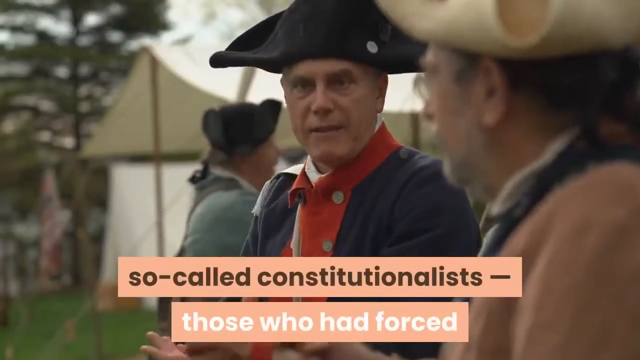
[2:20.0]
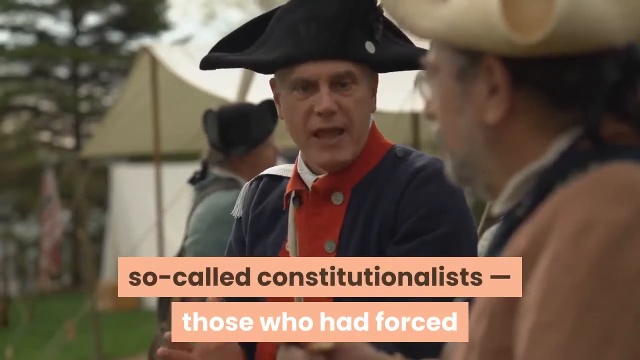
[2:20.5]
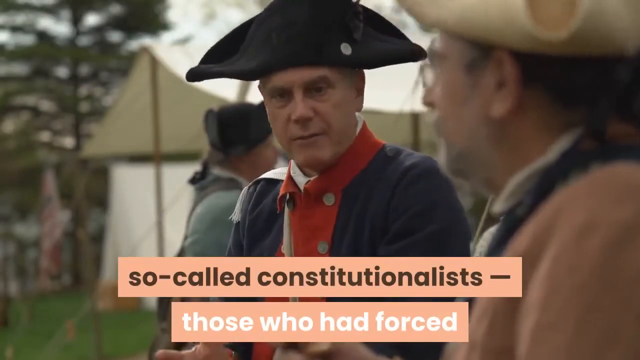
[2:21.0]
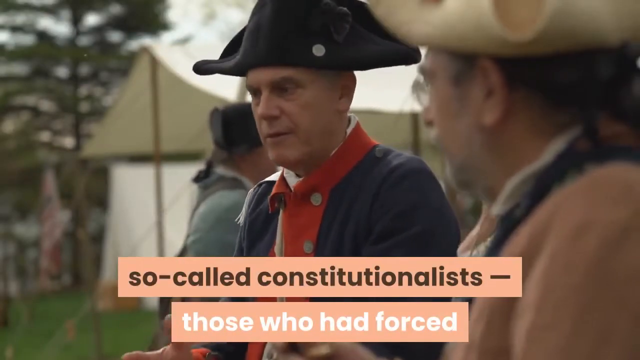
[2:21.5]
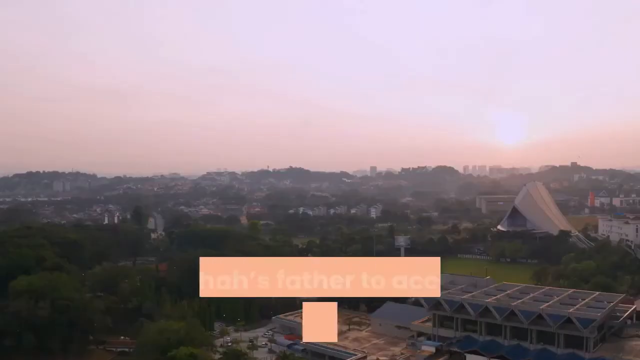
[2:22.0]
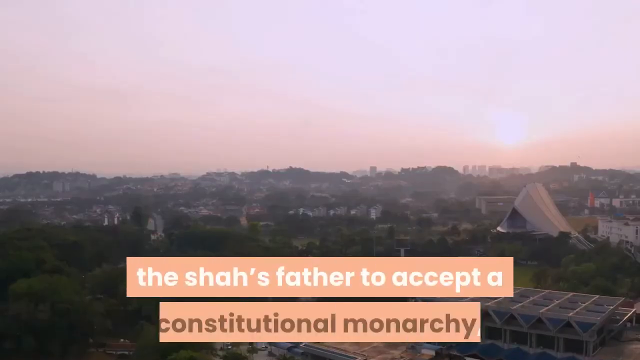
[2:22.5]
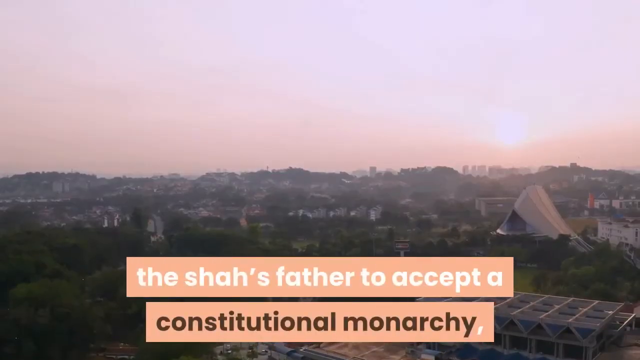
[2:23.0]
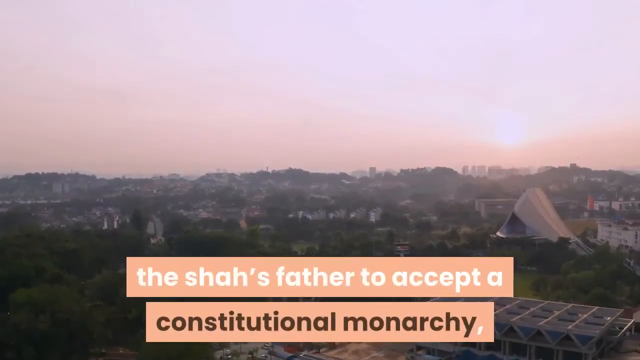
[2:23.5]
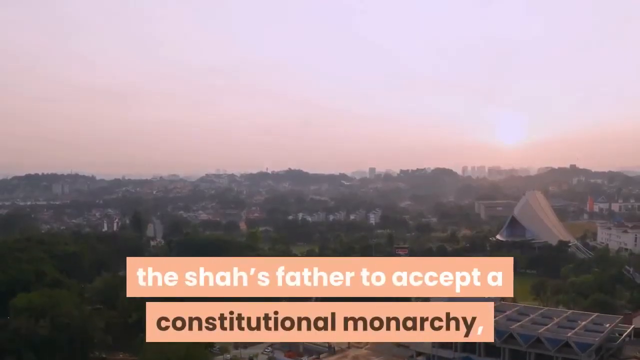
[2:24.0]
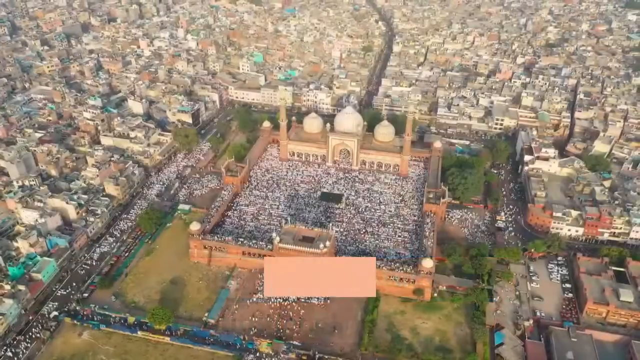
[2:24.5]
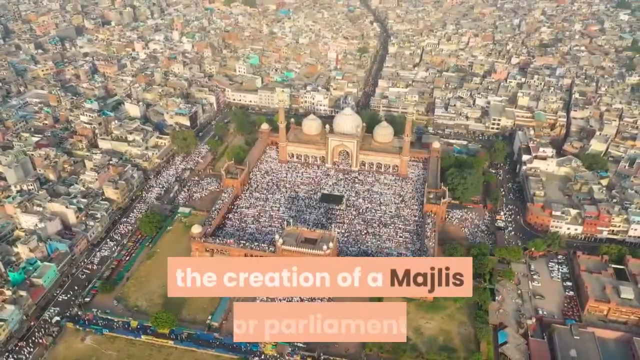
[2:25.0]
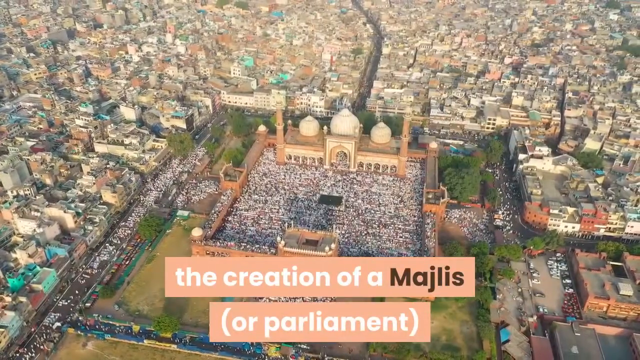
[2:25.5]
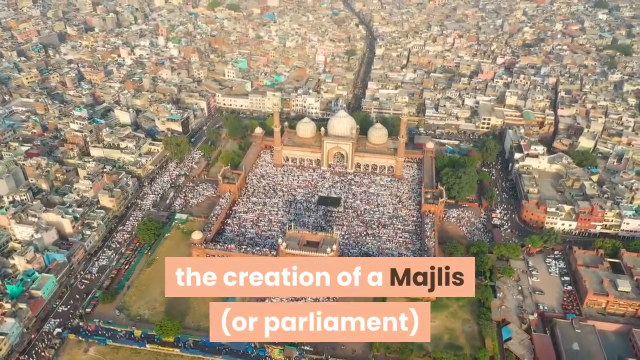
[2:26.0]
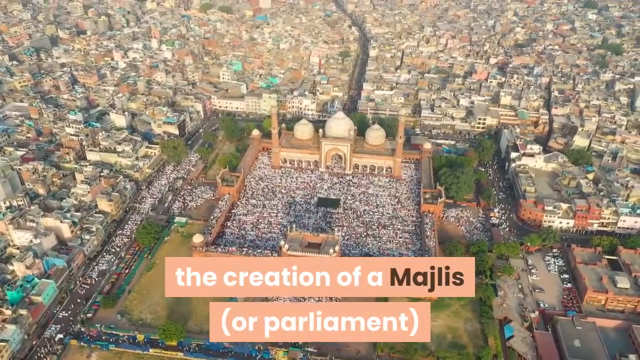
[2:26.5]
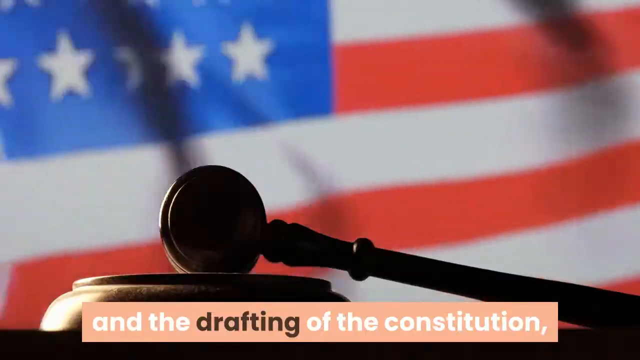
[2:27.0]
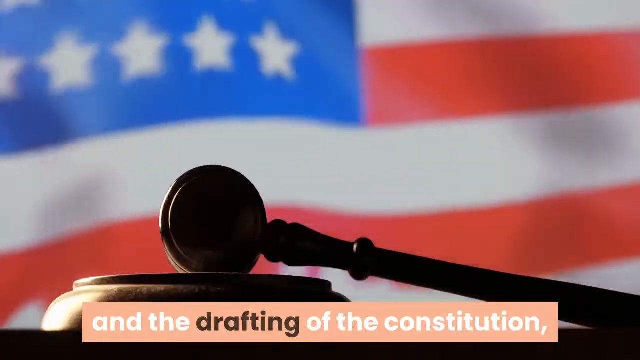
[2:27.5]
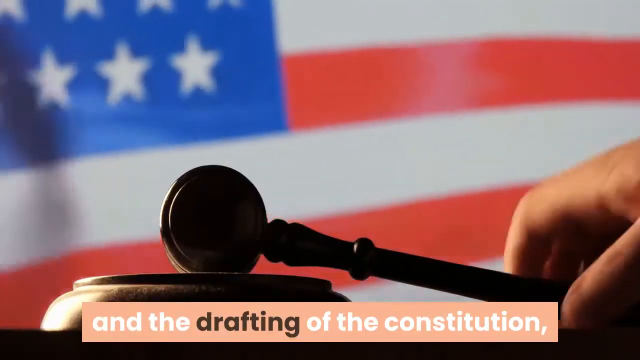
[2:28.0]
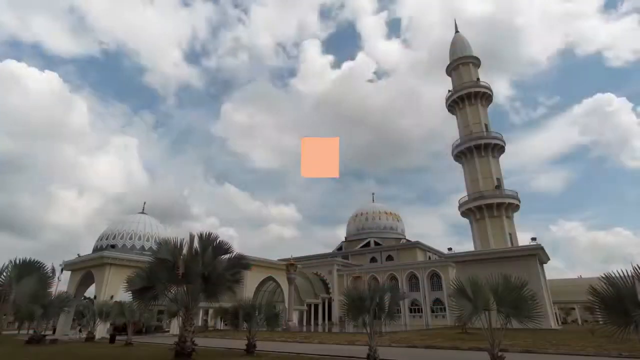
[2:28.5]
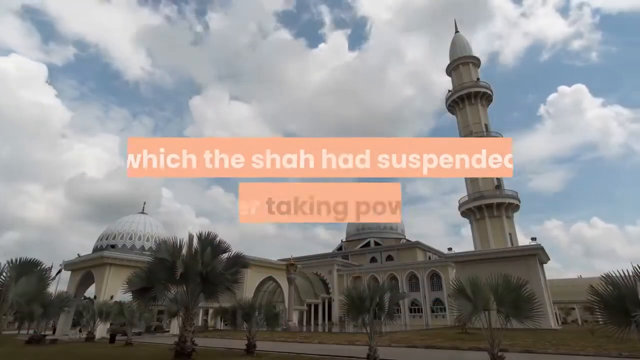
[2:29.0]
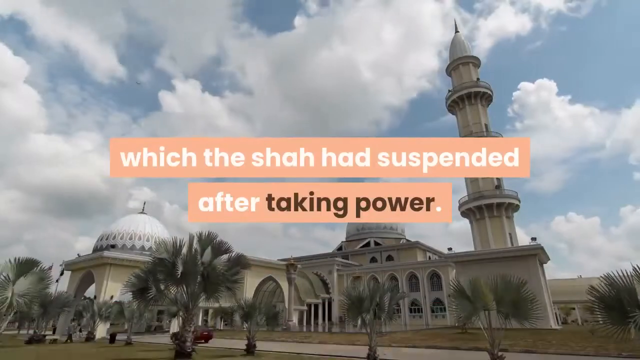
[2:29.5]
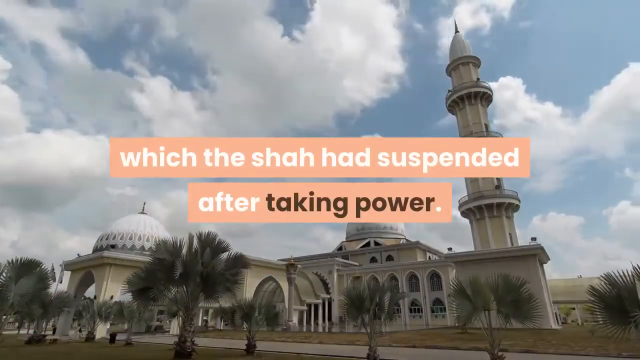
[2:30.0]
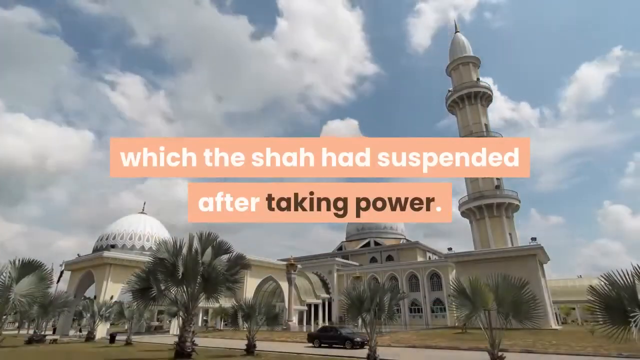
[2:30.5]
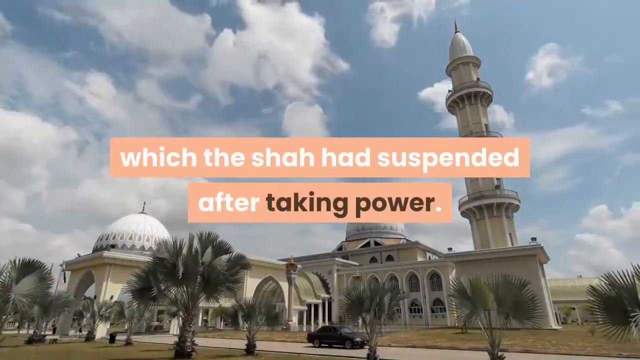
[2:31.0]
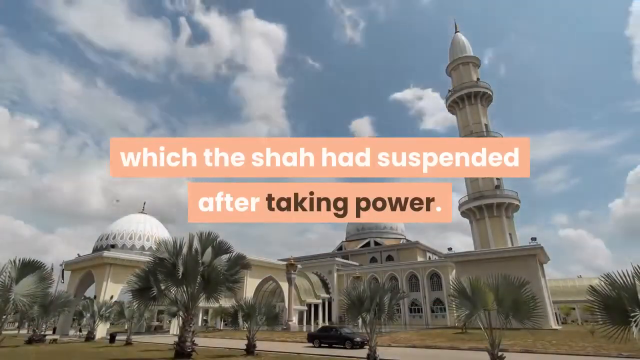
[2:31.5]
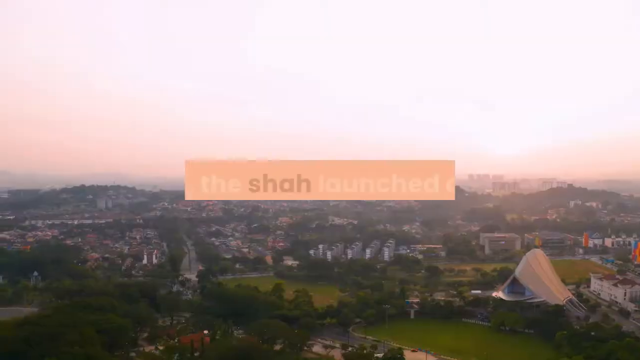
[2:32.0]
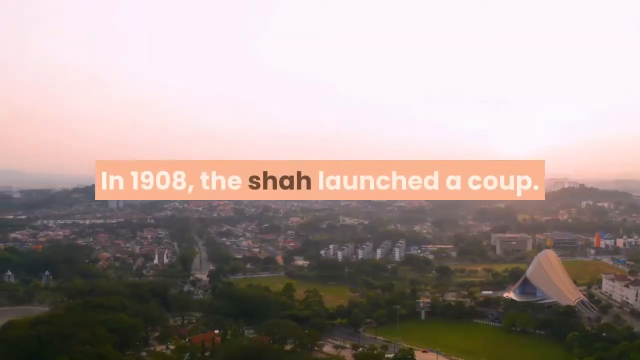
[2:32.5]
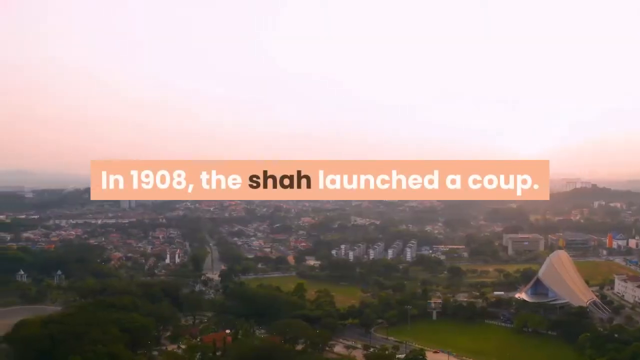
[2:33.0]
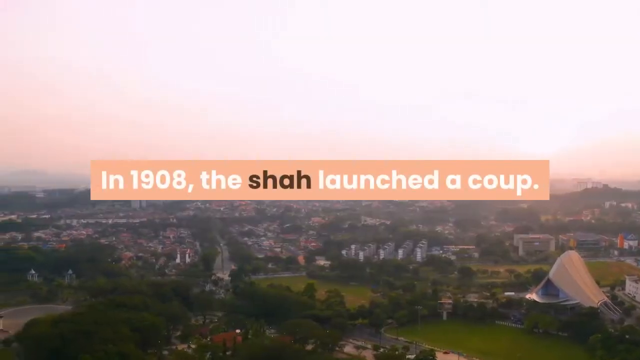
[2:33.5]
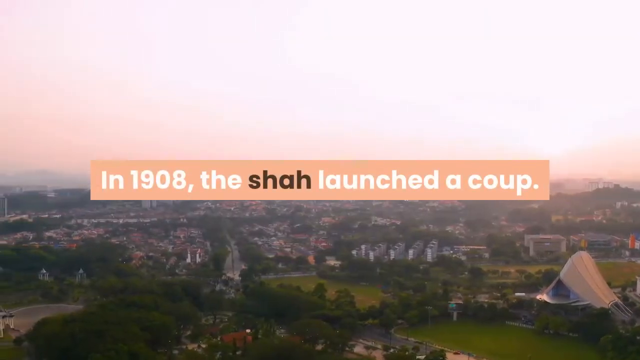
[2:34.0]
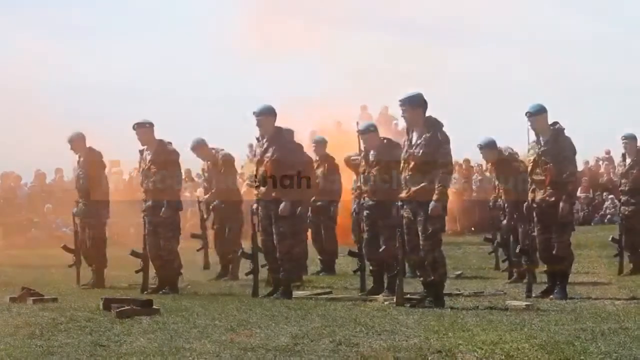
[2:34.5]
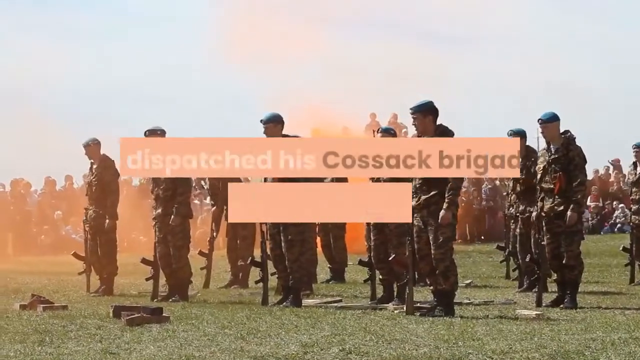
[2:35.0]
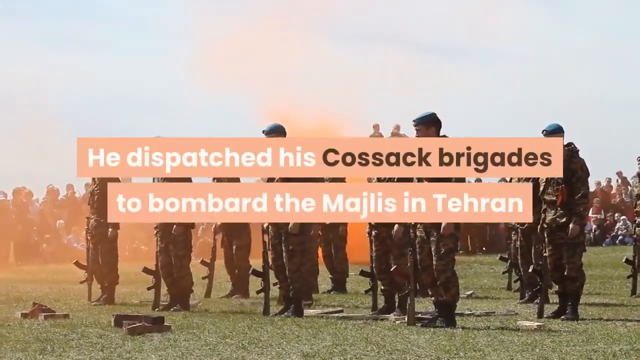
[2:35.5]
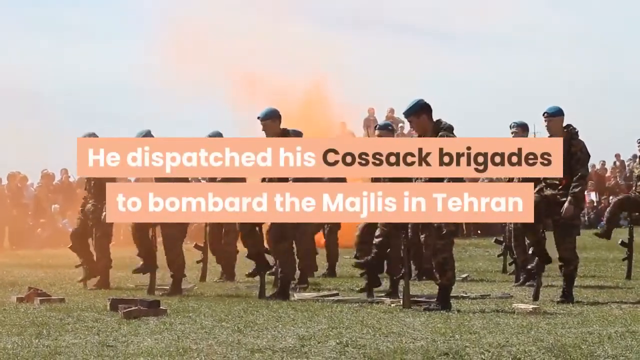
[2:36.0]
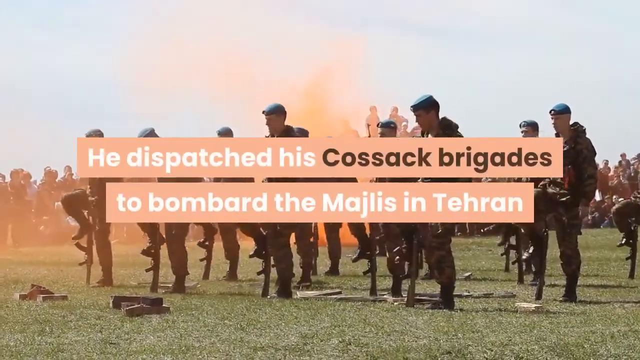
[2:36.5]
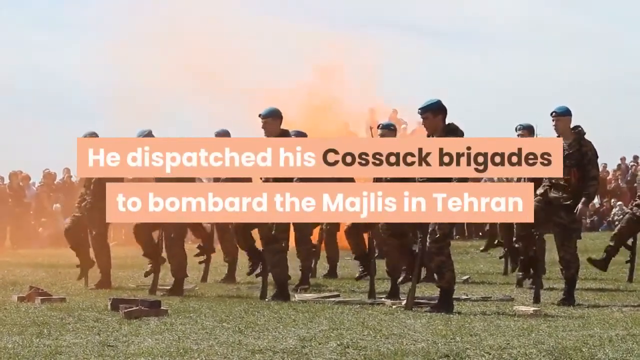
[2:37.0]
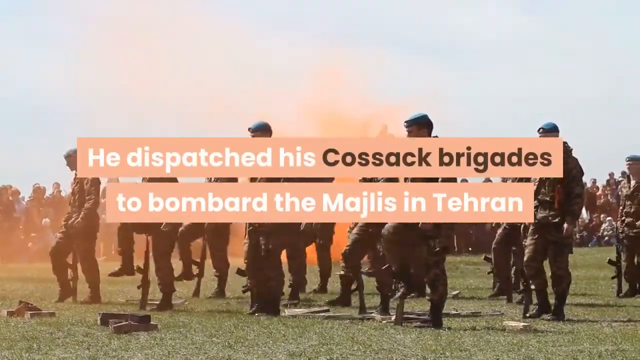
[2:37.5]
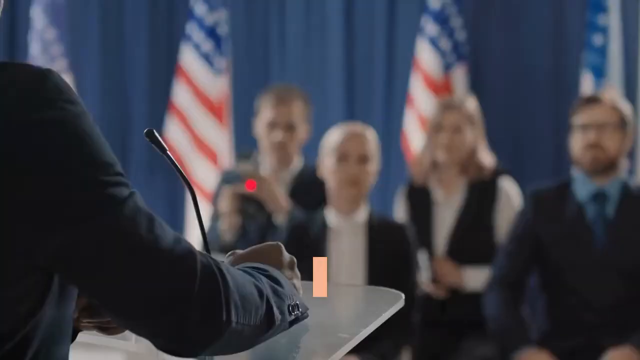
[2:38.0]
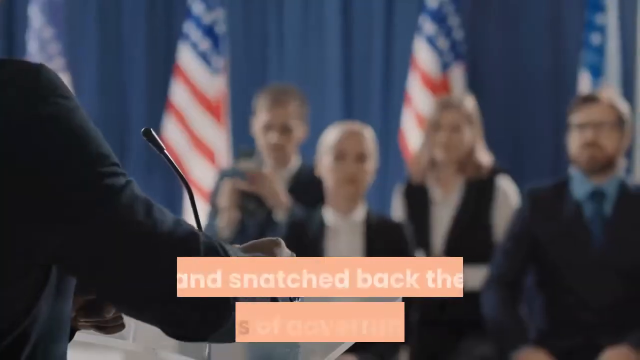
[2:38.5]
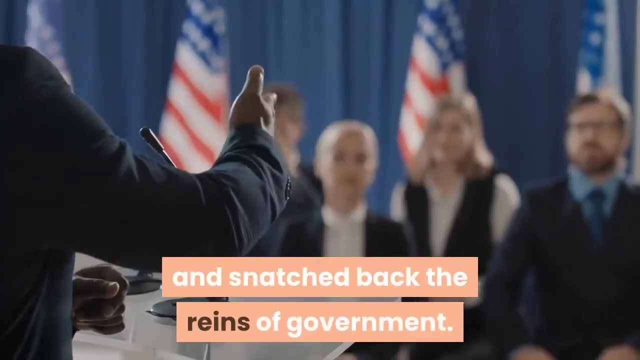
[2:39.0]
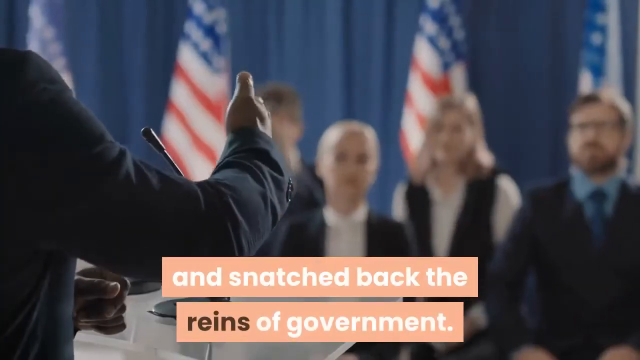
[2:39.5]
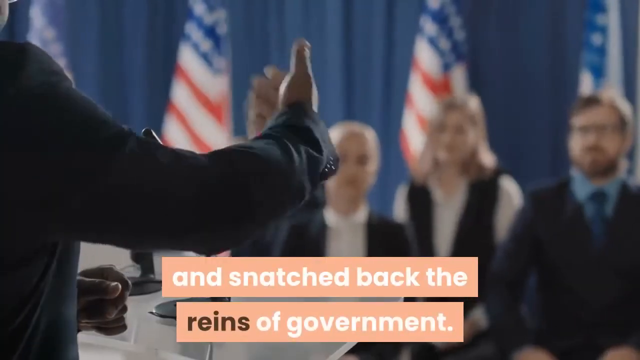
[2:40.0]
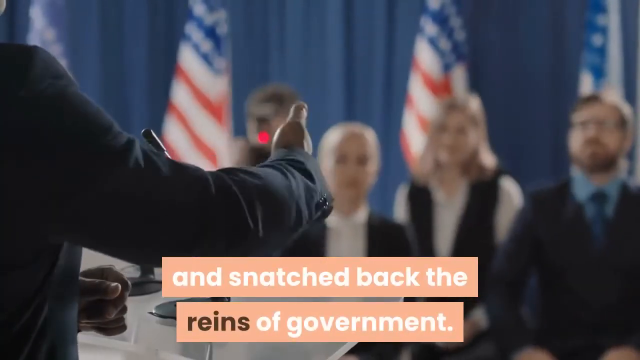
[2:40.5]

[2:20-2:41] The Revolutionary War army camp gives way to a view of an Iranian city from much further out, showing some of the surrounding countryside. Then an overview of the city shows a mosque in the center with people crowded into its courtyard. An American flag waves with a gavel in front of it, and somebody reaches down and picks up the gavel. A close-up of the Iranian city from ground level shows domed buildings and a tower, followed by a distant overview of the city where the countryside is visible. Iranian soldiers wearing berets stand with guns, doing some kind of military exercise. Then comes what looks like some kind of press conference in the United States, with people sitting facing a man who speaks at a podium. The text describes what happened after the revolution and how the Shah took power back.